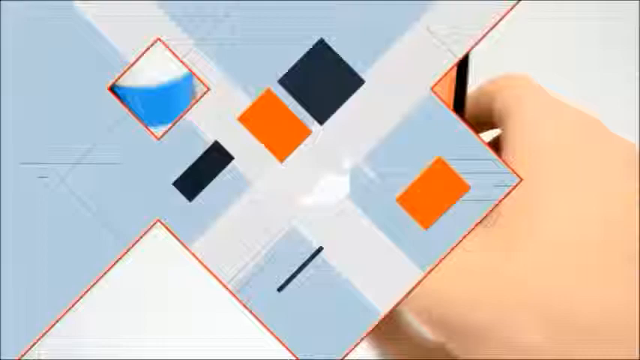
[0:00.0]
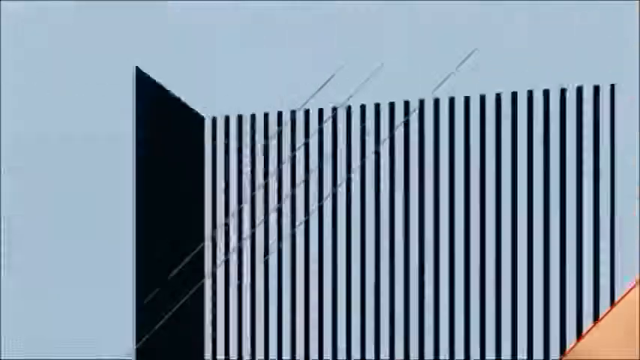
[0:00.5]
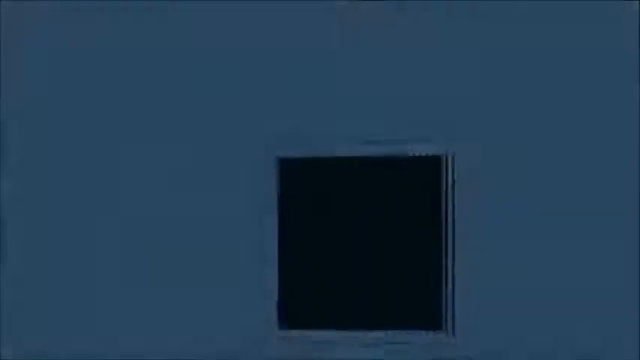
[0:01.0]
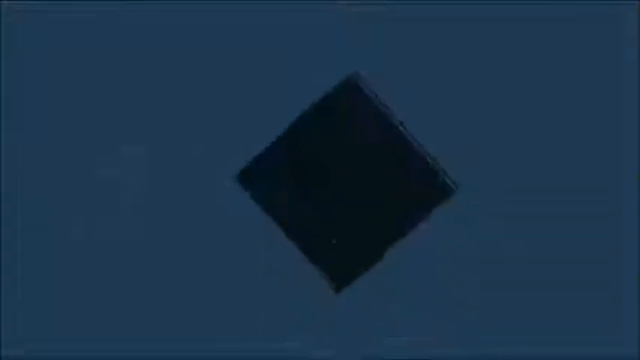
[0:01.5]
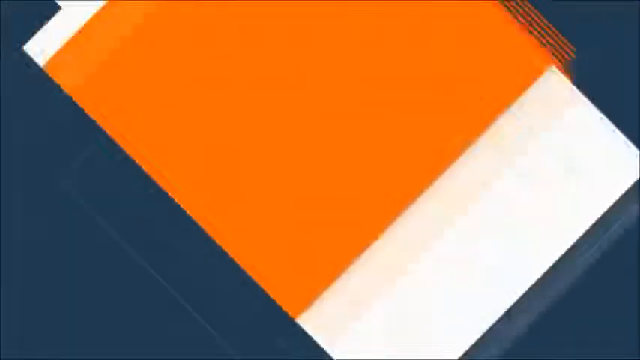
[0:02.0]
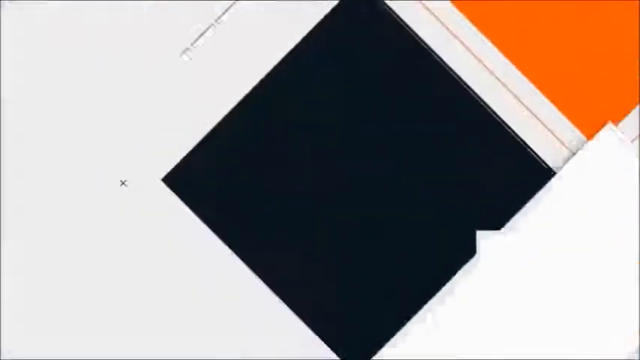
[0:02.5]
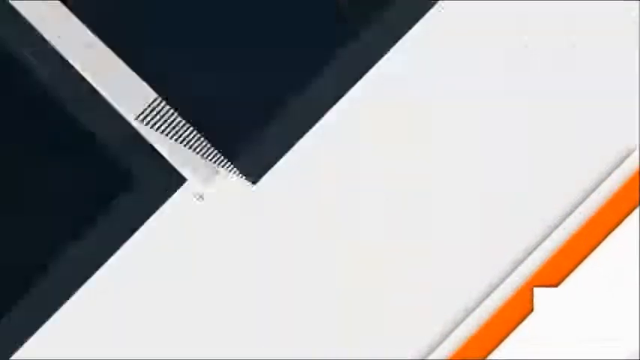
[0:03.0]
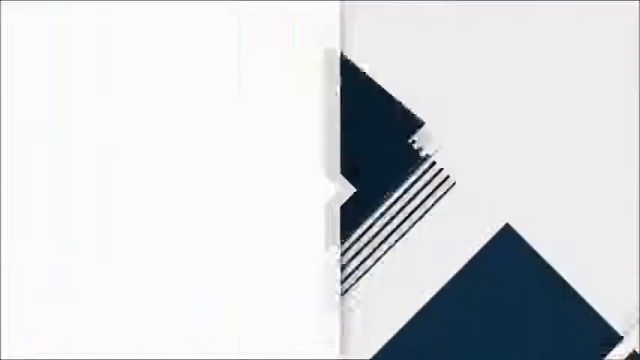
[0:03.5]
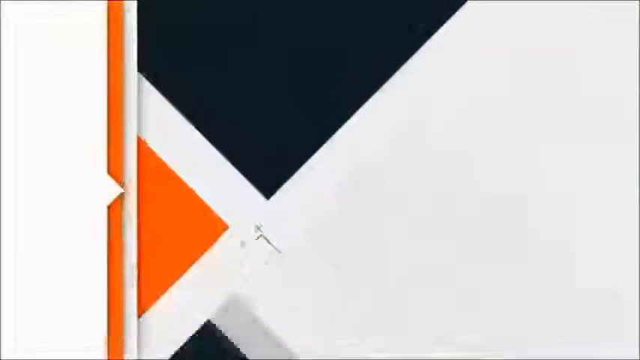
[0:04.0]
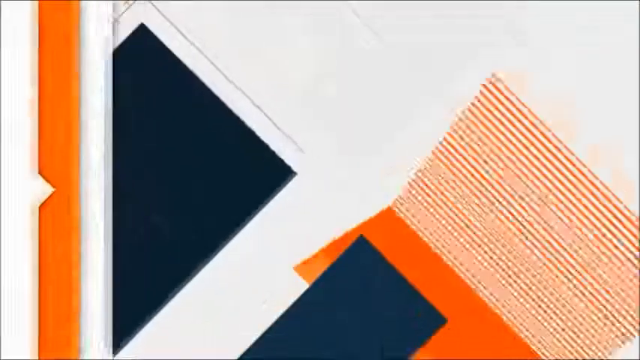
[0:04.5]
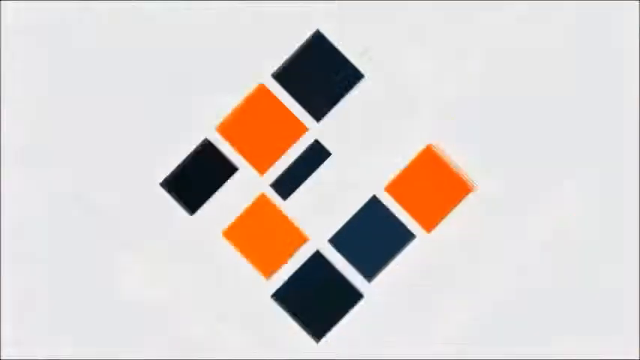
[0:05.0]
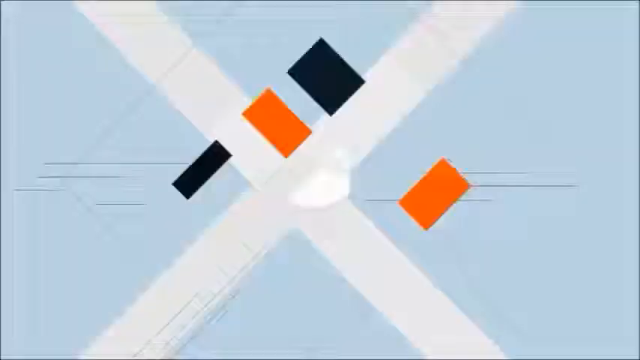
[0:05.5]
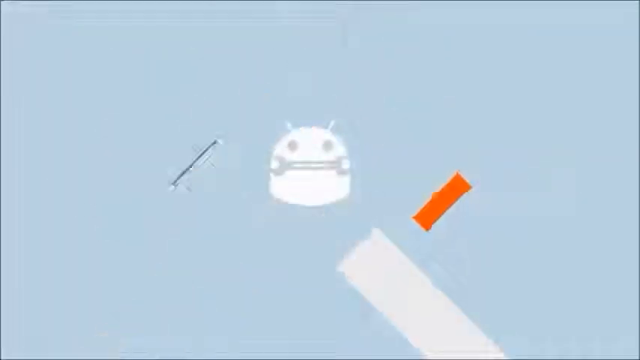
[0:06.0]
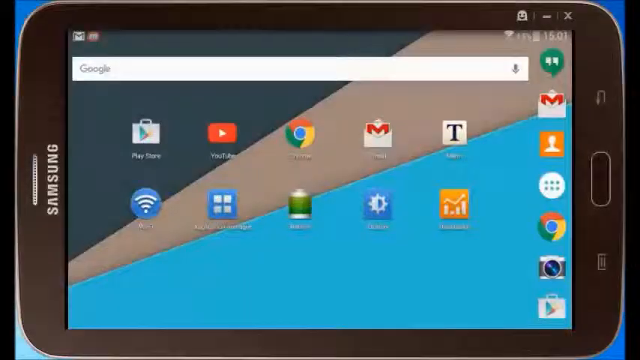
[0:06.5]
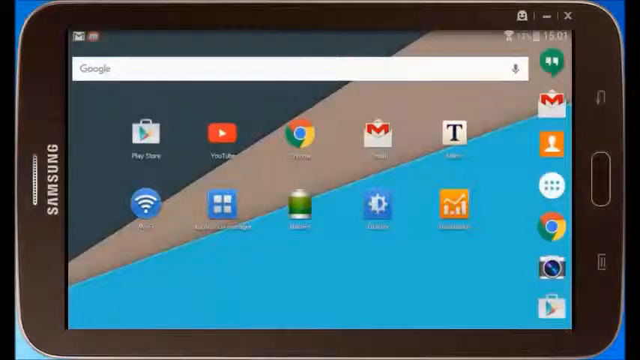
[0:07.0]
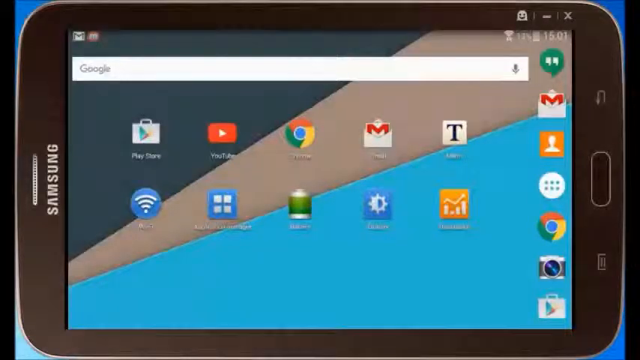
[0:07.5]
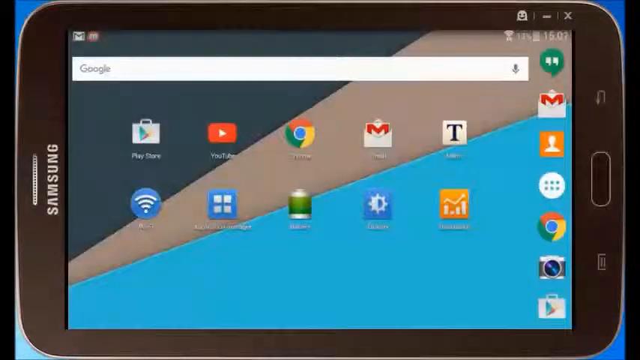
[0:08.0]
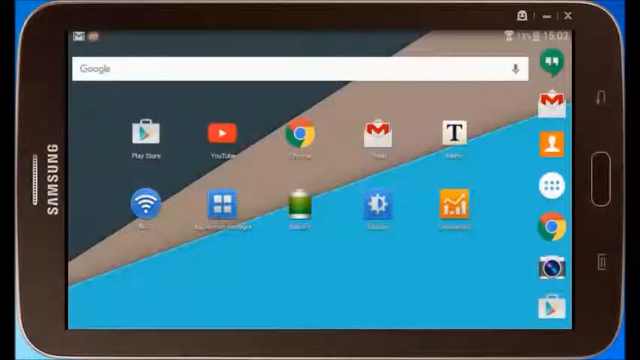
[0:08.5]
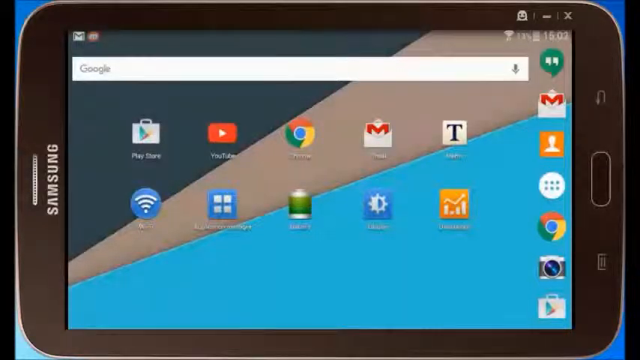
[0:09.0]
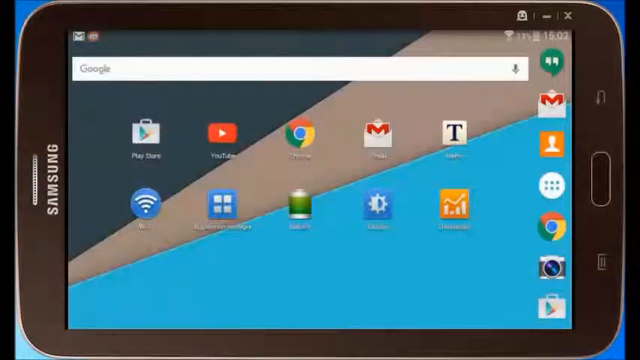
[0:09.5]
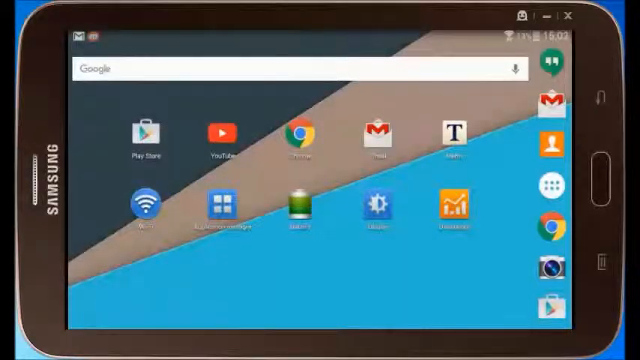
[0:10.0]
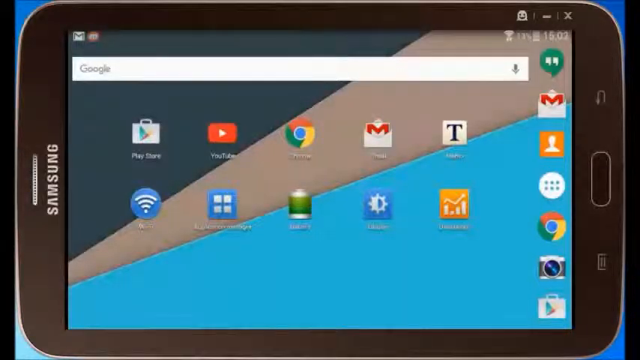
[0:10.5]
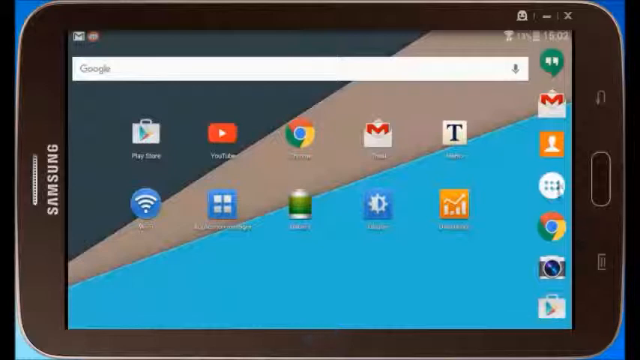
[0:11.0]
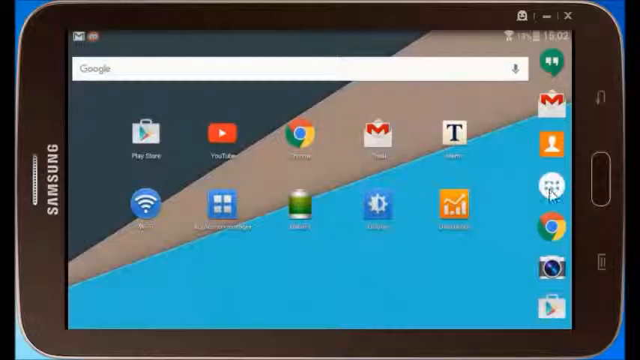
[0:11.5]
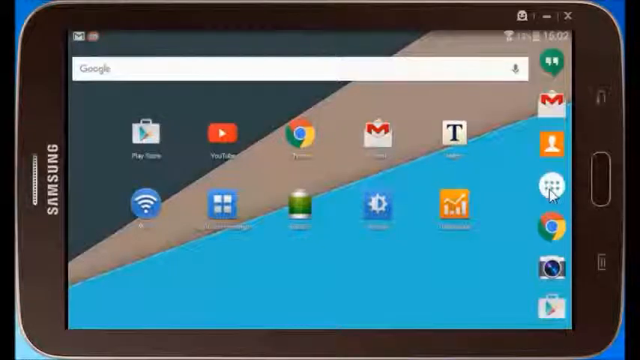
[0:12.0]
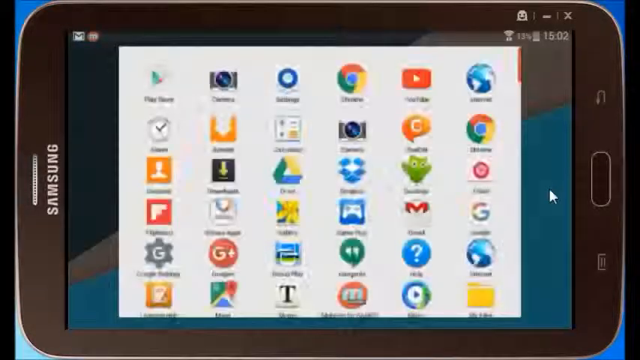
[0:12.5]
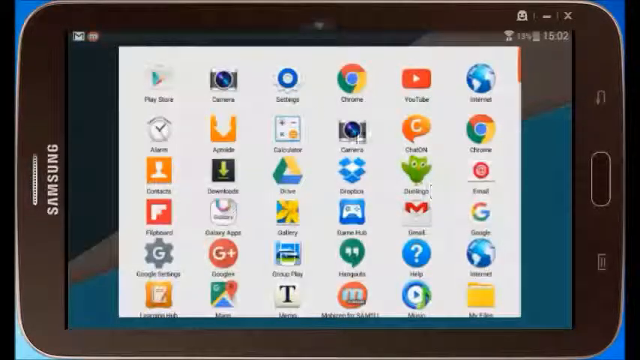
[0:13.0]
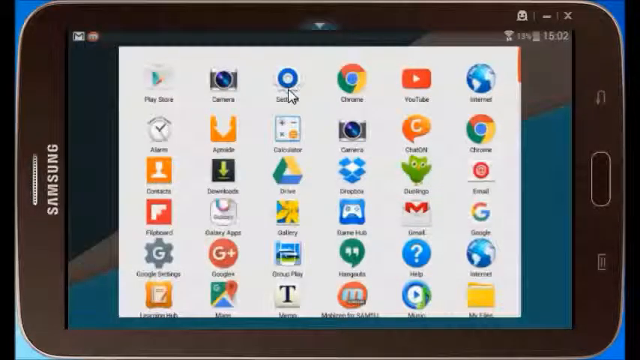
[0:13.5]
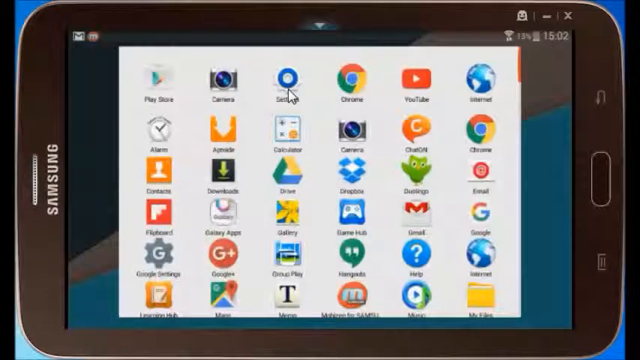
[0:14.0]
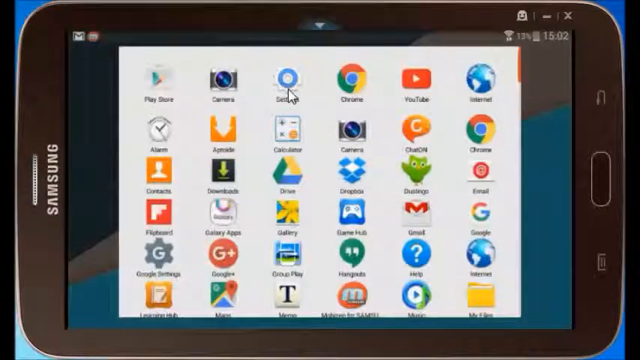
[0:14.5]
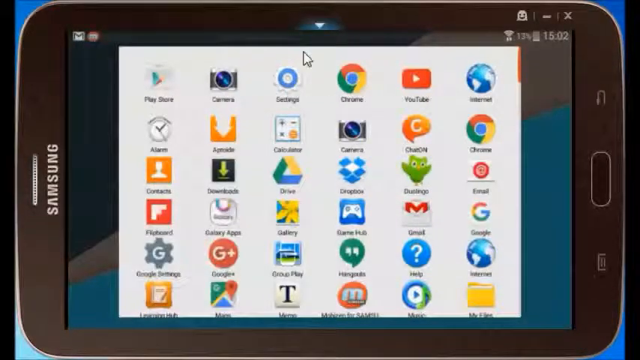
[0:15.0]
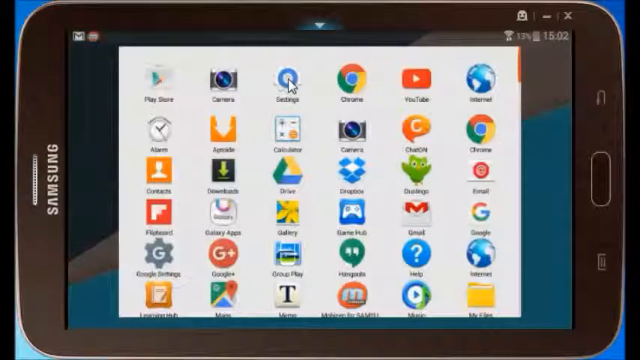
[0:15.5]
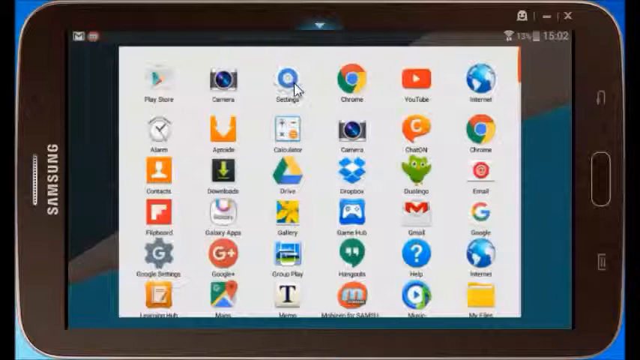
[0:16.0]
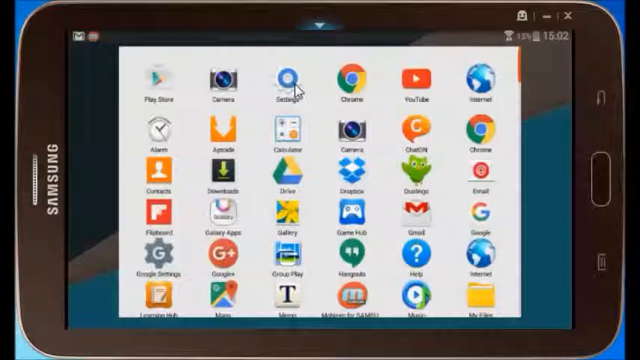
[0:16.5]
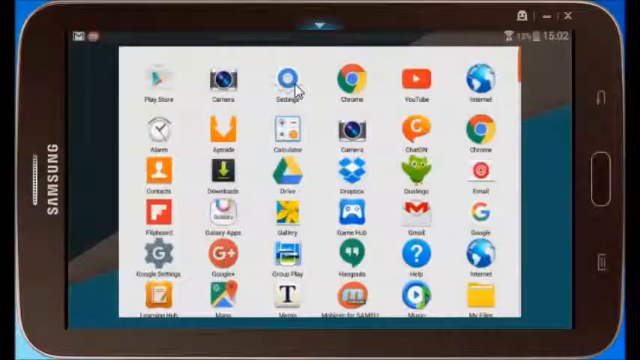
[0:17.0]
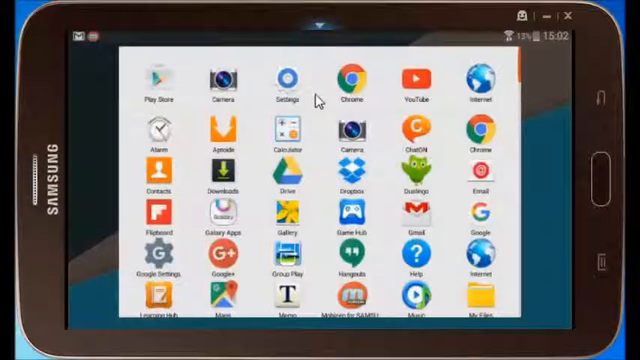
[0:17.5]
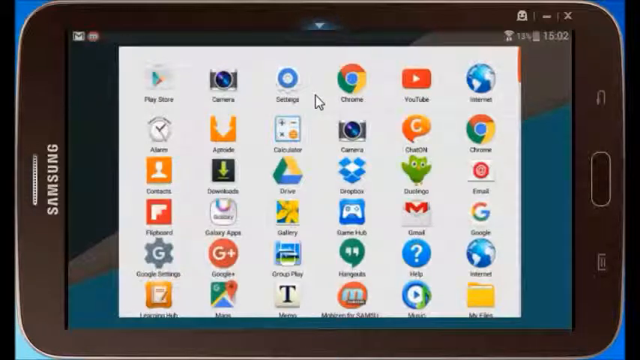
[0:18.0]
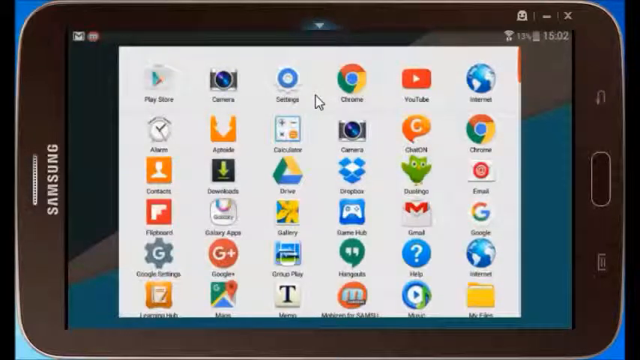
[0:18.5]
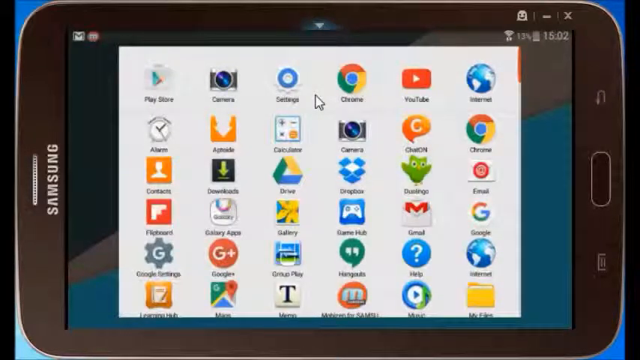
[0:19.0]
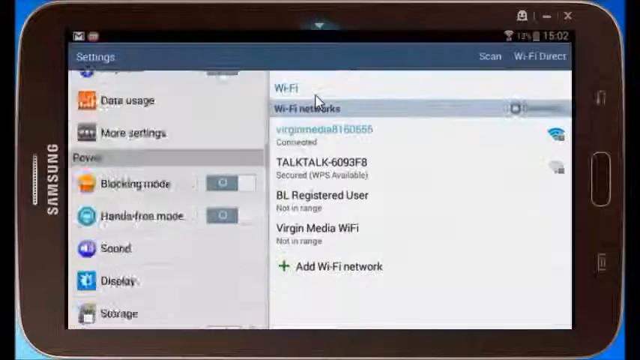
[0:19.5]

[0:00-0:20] The video opens with a graphic of many colors and shapes in squares and rectangles, diving in and out of each other and moving back and forth through each other, mostly in oranges, blacks and whites, with blue as well; it is probably the channel's opener and logo. An Android device appears, shown from a side view: a Samsung, probably a tablet. A cursor clicks the home button in the middle of the screen to open the app screen, then locates the settings button and clicks it. It then goes to the Wi-Fi section and starts scrolling through it. It appears to be an instructional video about the device.